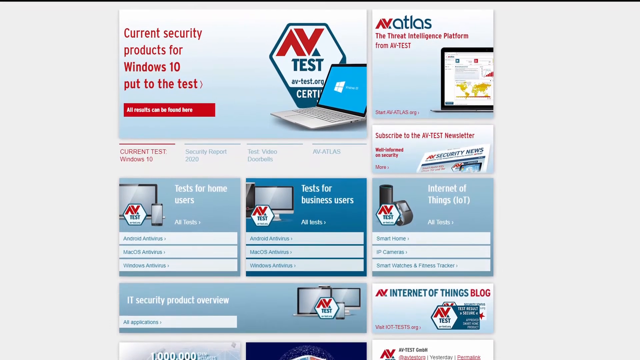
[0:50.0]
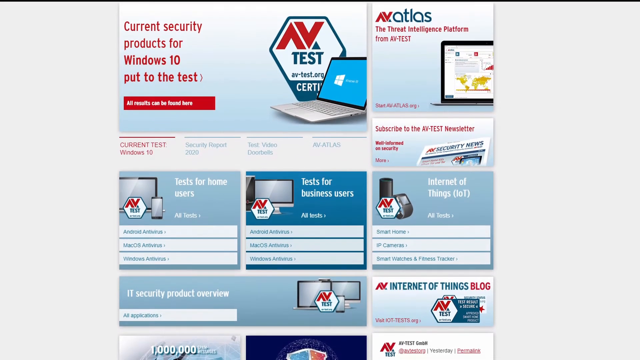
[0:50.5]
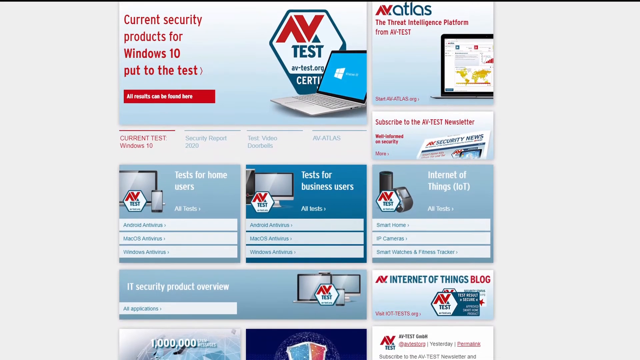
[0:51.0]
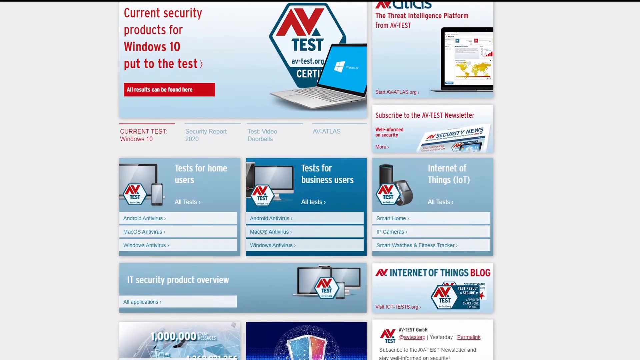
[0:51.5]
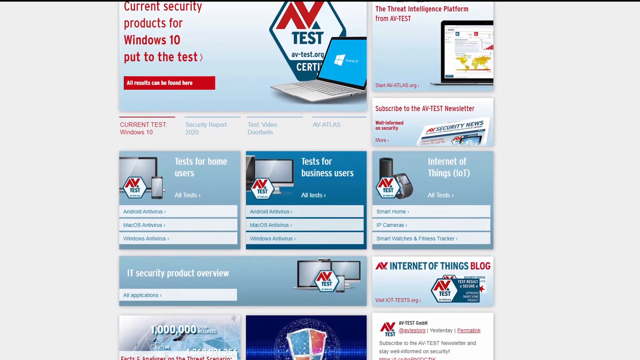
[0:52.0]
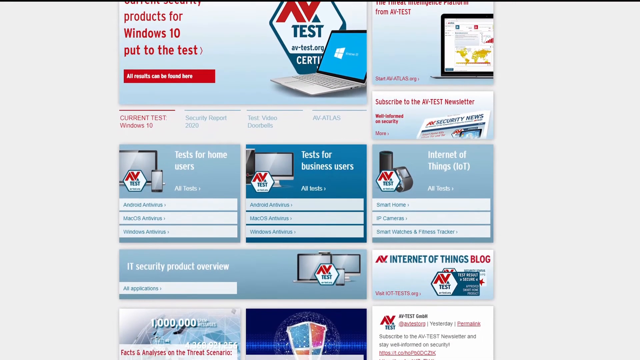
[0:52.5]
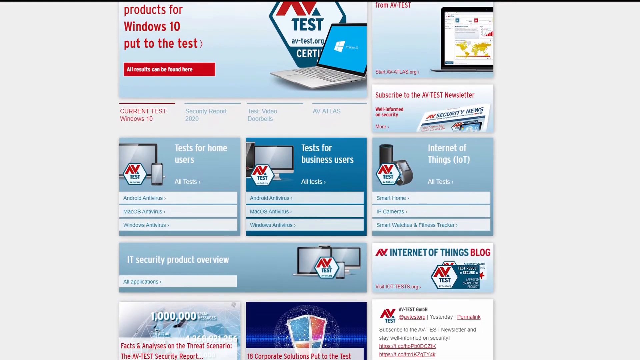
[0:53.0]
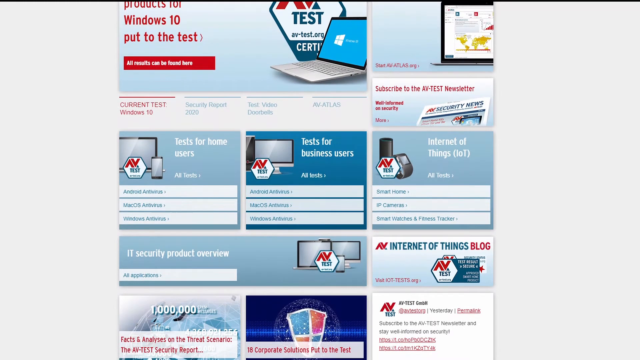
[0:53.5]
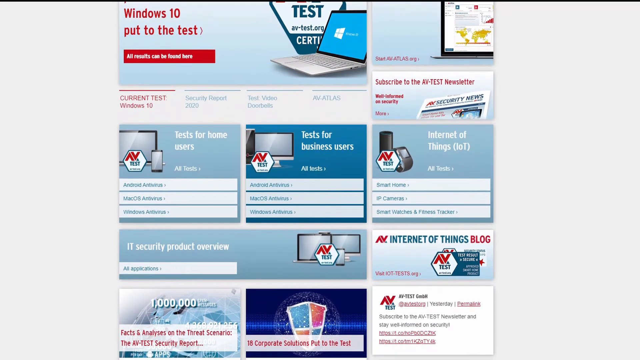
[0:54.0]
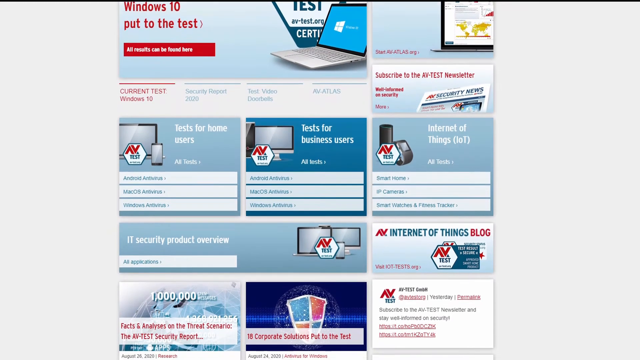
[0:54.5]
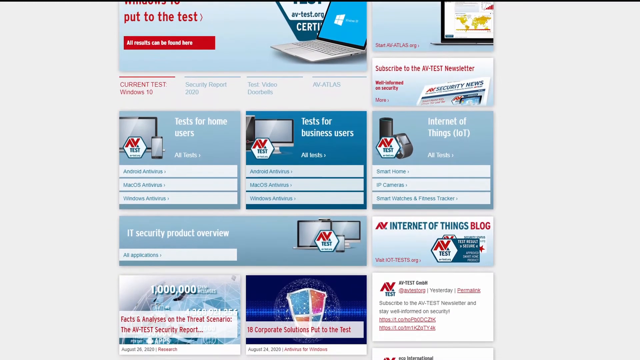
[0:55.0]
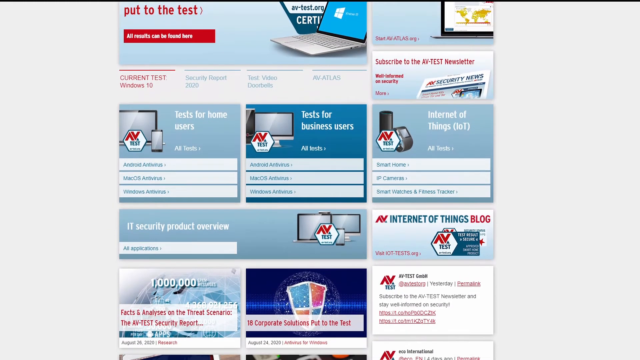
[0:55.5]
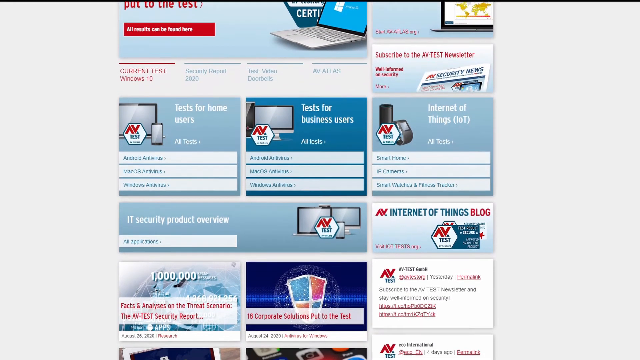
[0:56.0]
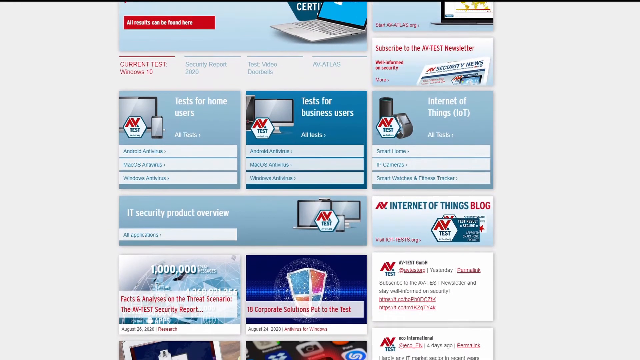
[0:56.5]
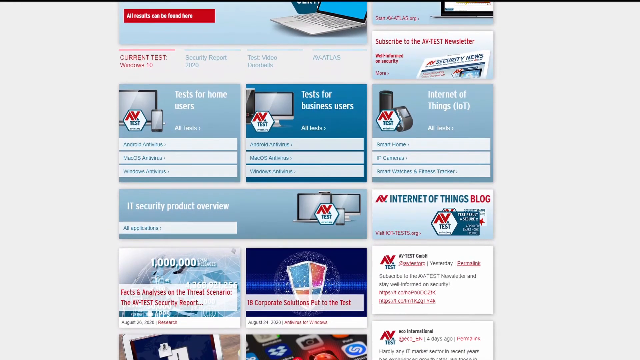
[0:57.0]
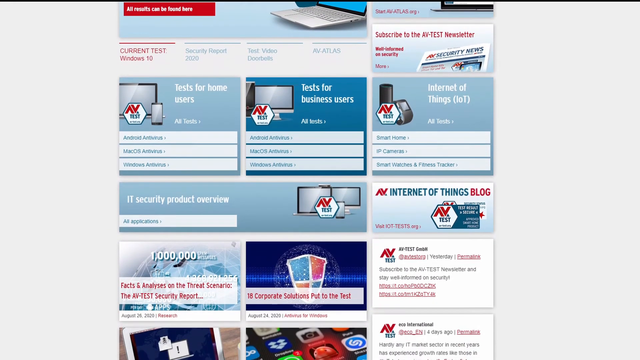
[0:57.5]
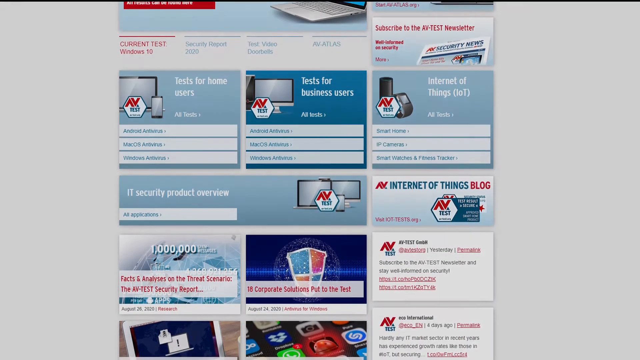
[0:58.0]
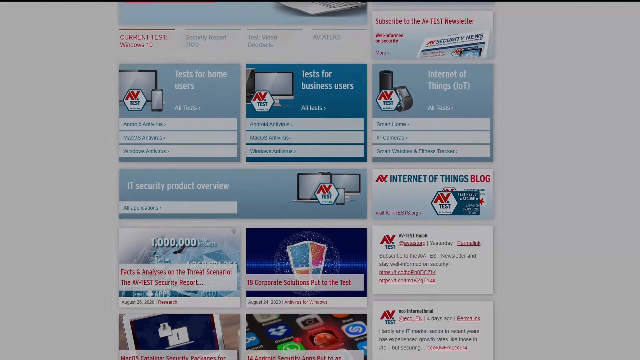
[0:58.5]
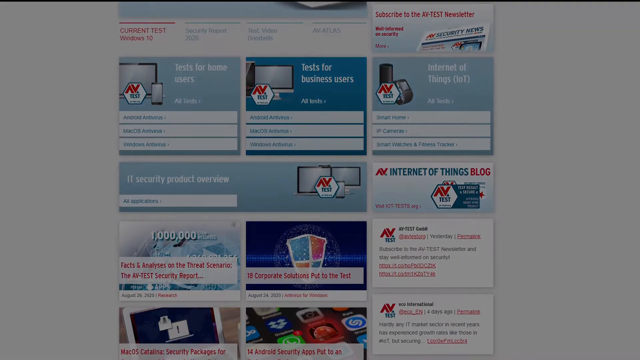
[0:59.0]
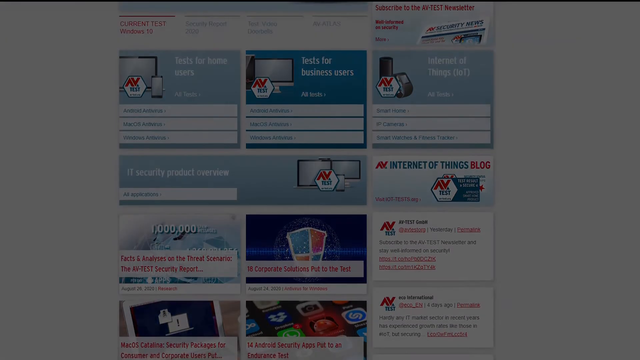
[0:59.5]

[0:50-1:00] The av.atlas test site, which appears to list security products for Windows 10, shows items reading "tests for home users", "tests for business users", "Internet of Things", "IoT", "IT security product overview" and "Internet of Things blog". The screen slowly fades to black, and just before the shot ends, green letters reading "protection" appear.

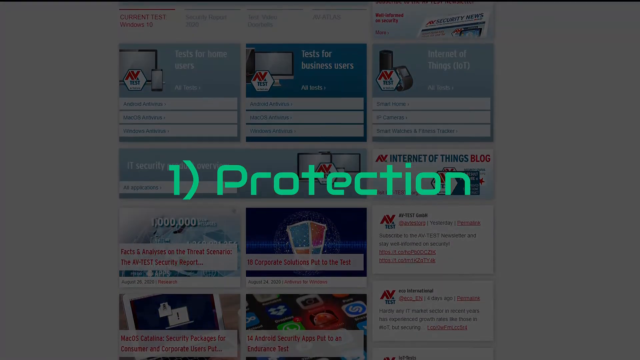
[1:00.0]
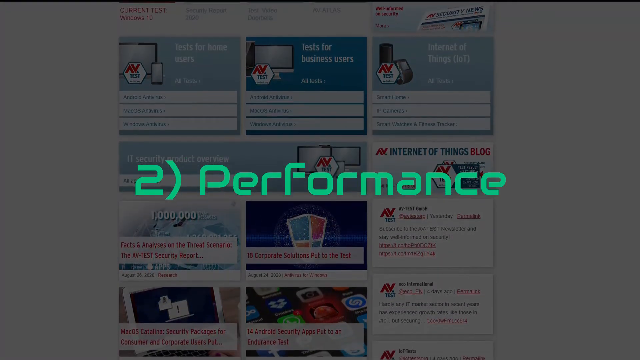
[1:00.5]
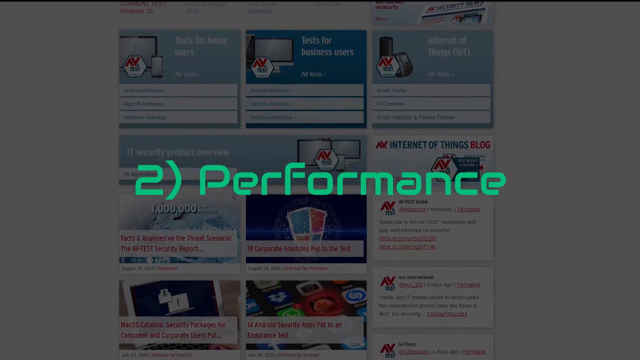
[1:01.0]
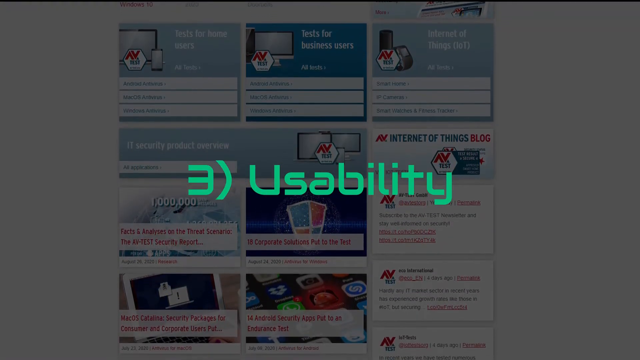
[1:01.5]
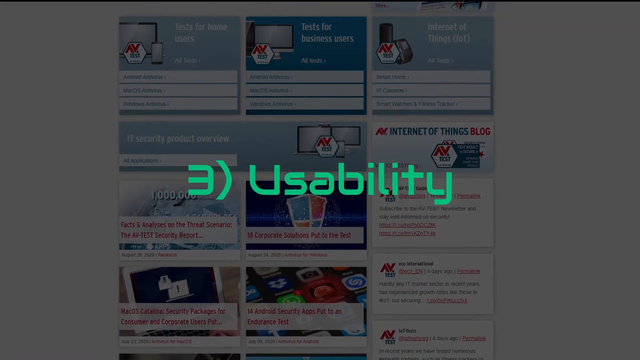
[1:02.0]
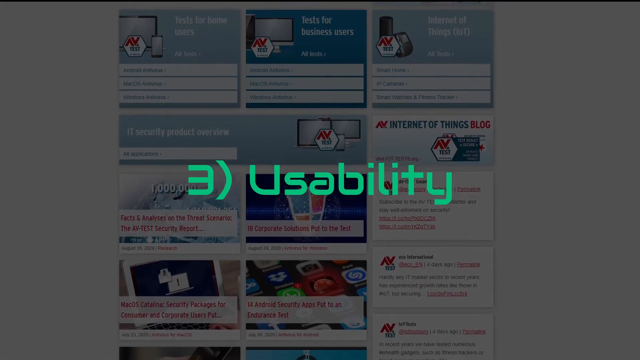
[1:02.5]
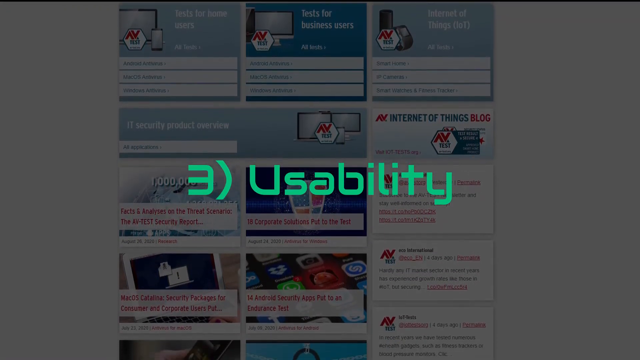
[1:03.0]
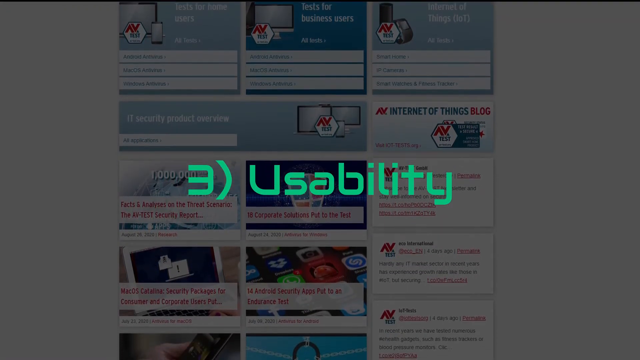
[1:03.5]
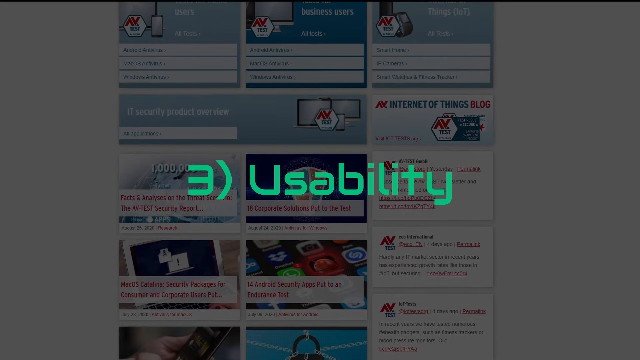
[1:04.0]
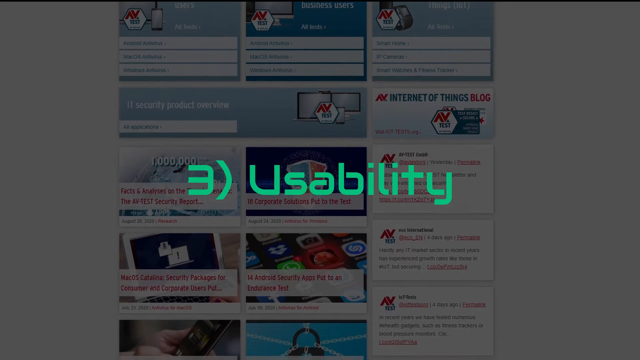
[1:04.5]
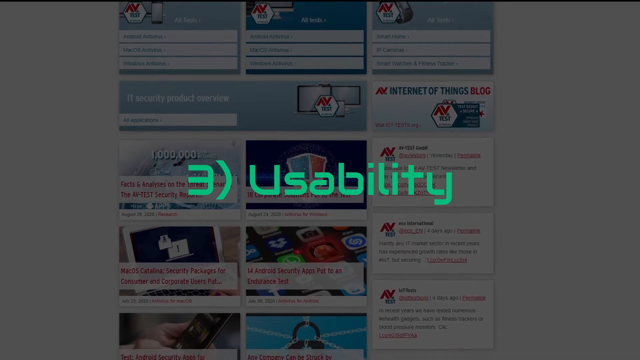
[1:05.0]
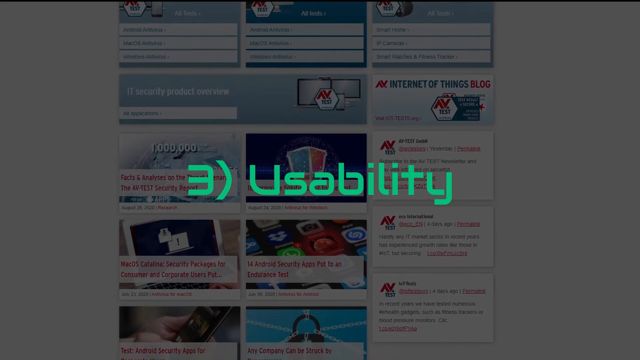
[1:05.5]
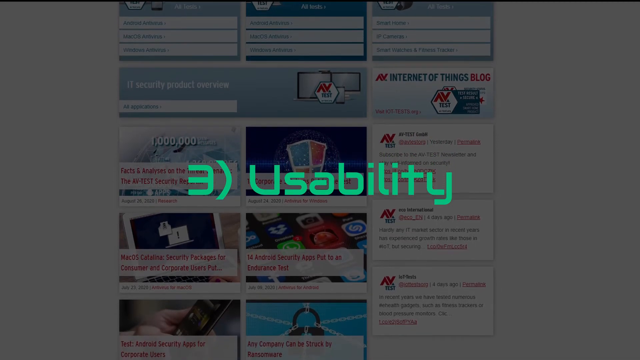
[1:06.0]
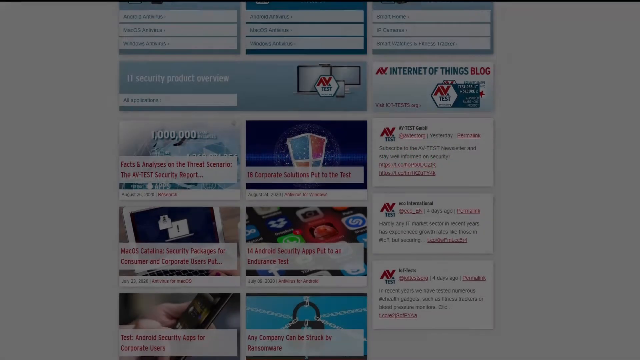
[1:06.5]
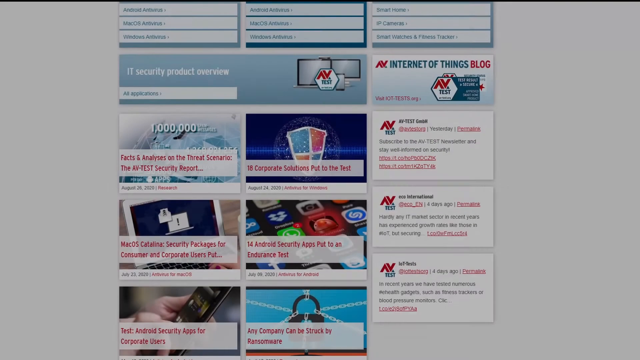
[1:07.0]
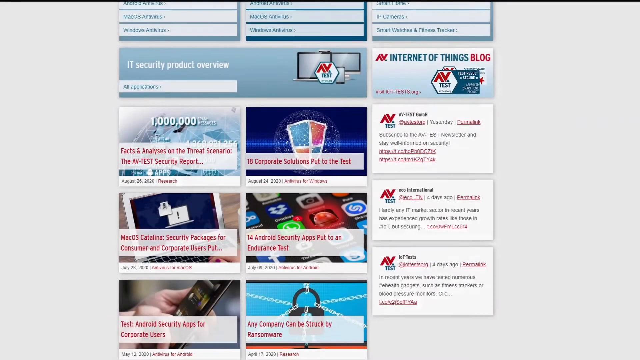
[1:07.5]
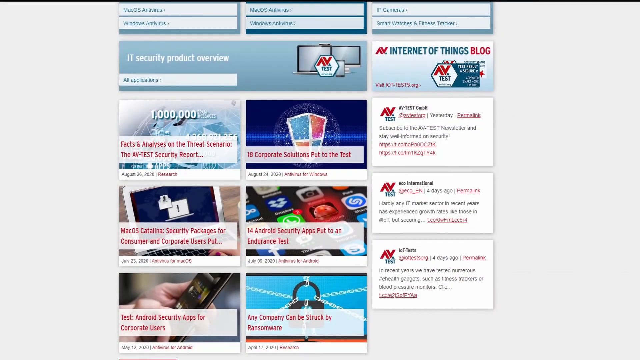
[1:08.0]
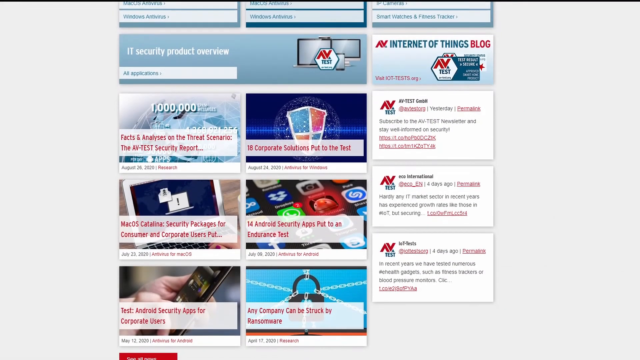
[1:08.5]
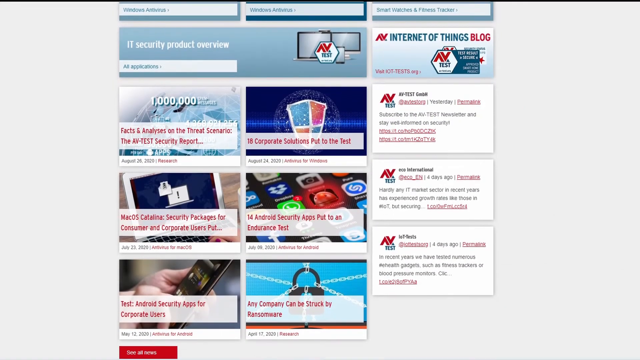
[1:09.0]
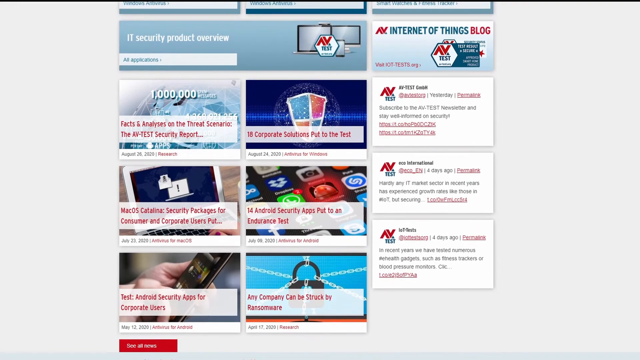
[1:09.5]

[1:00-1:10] The screen reads "one protection", presumably part of a list. It quickly switches to "two performance" in the same green lettering, and almost immediately after to "three usability", also in green. The screen has not gotten any darker. The text stays on "usability", which appears to be the last item of the list. The screen then brightens again and the view scrolls back down the page.